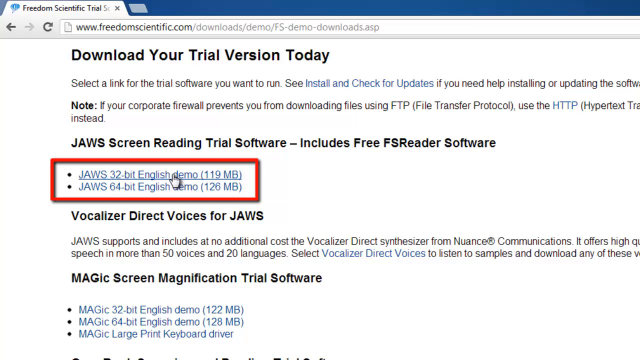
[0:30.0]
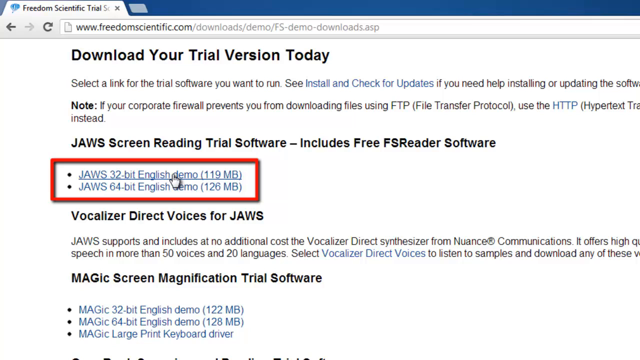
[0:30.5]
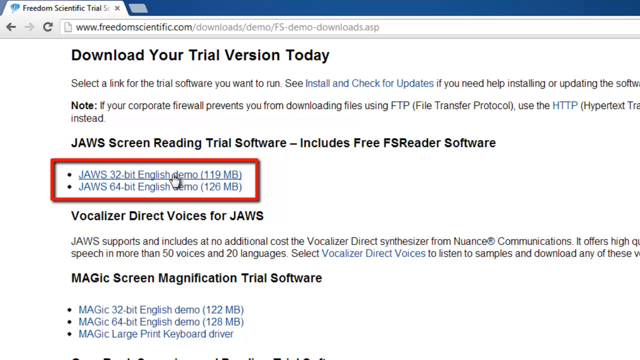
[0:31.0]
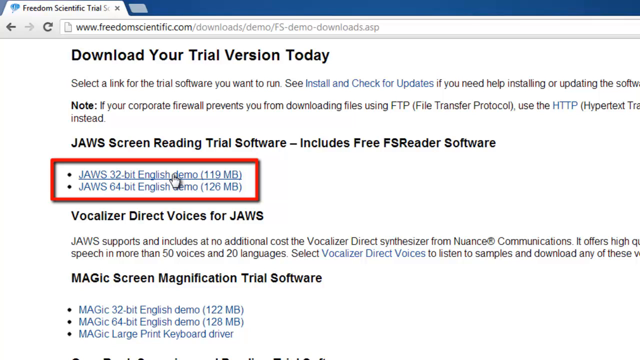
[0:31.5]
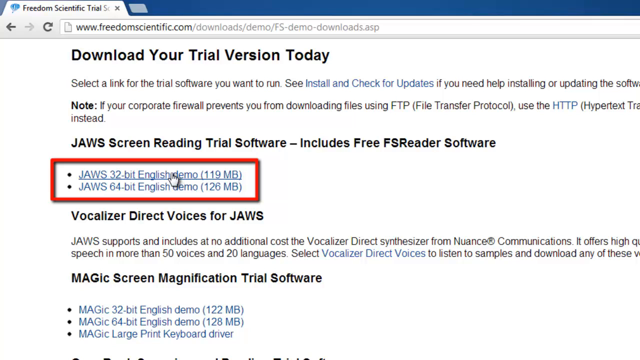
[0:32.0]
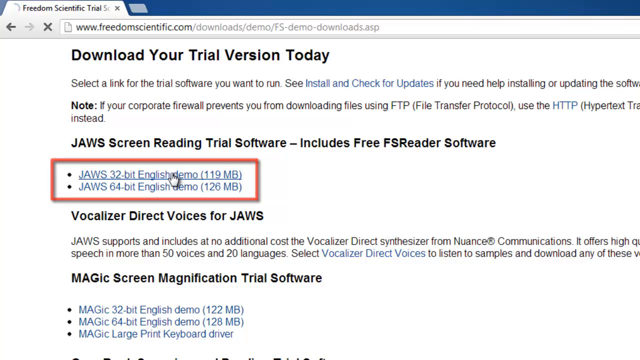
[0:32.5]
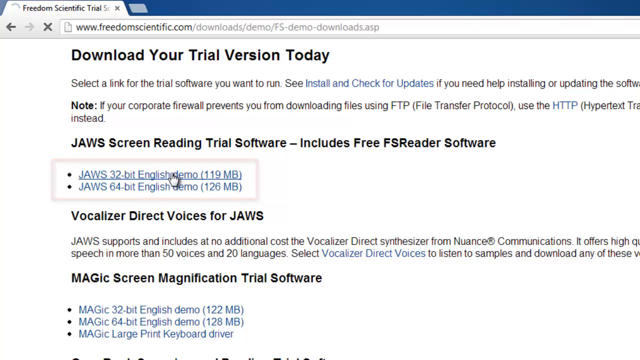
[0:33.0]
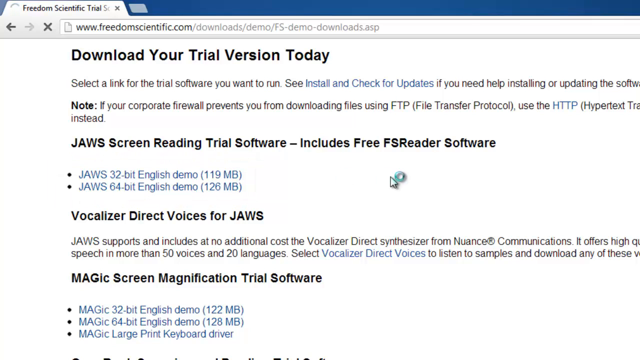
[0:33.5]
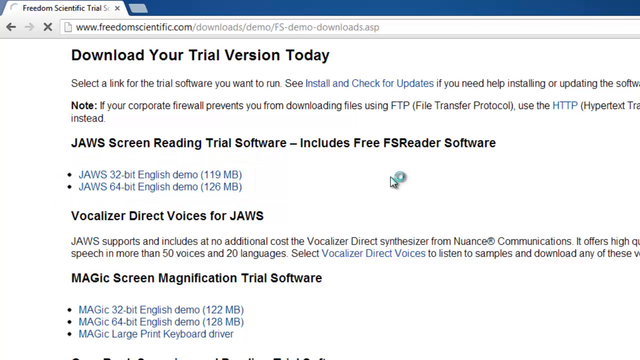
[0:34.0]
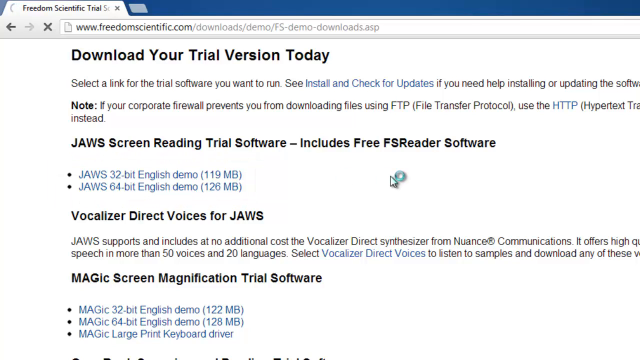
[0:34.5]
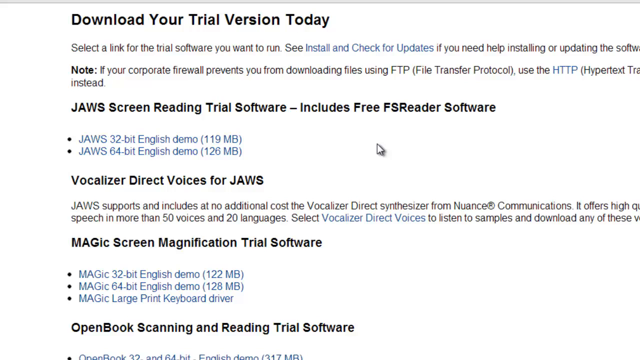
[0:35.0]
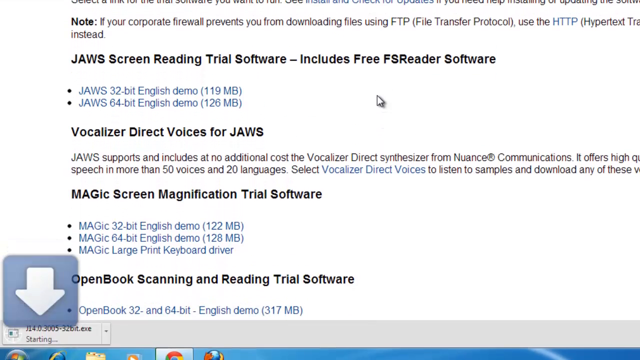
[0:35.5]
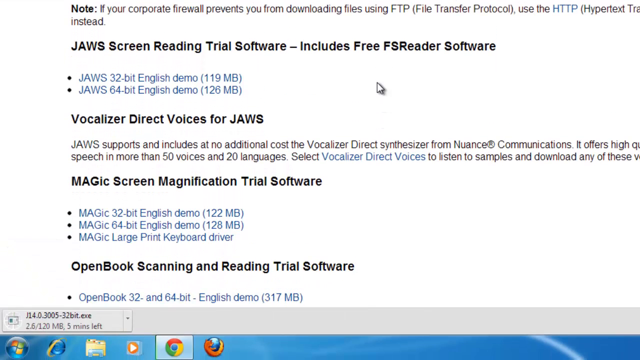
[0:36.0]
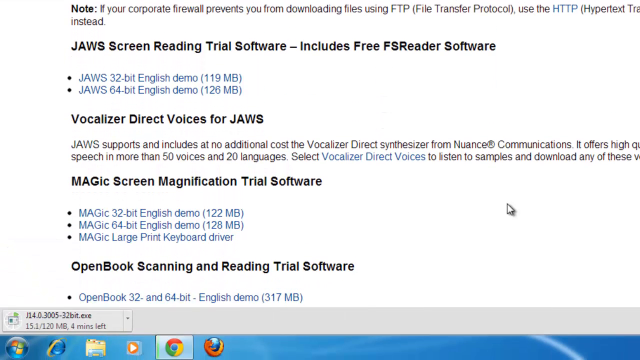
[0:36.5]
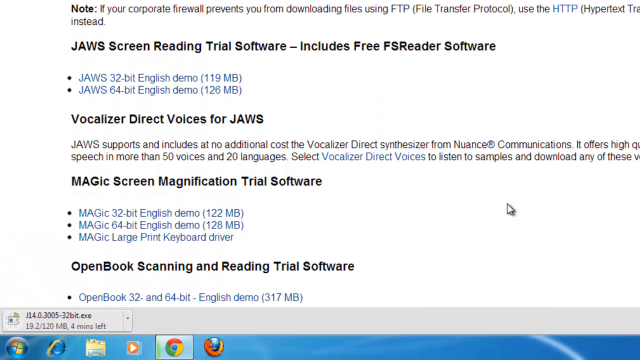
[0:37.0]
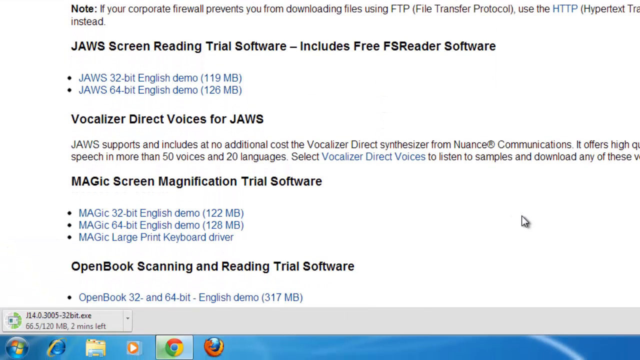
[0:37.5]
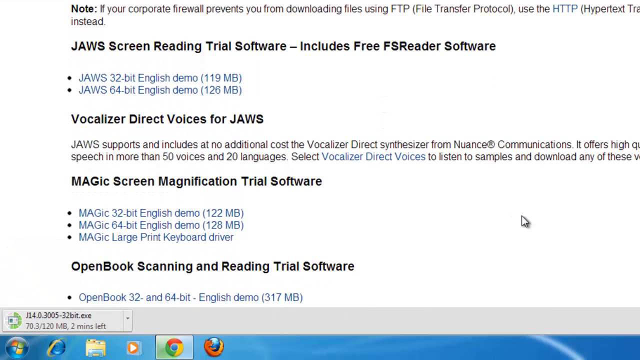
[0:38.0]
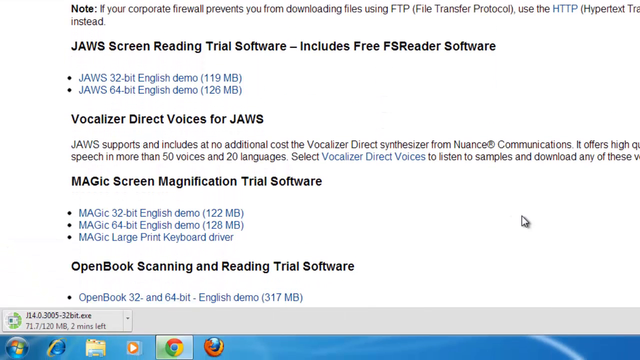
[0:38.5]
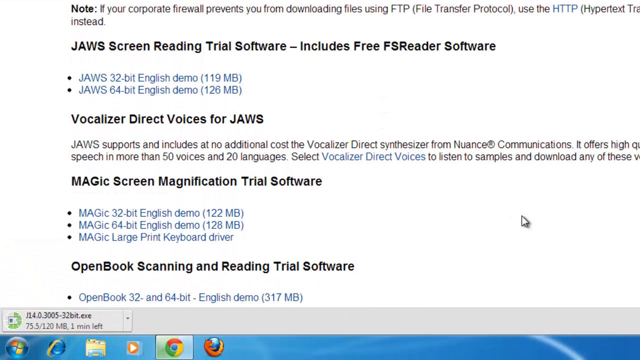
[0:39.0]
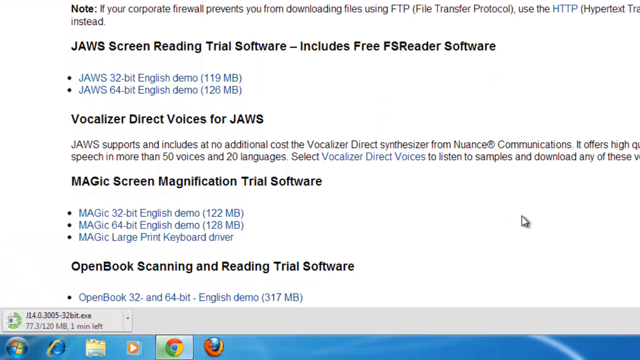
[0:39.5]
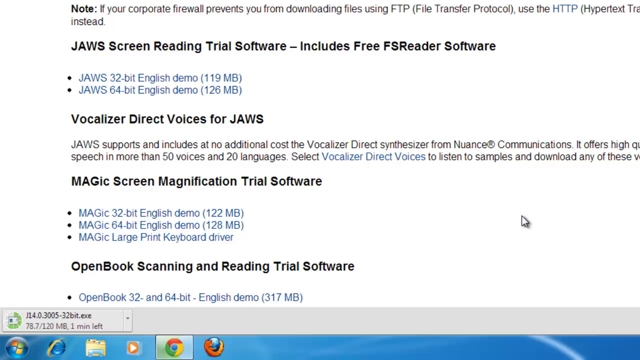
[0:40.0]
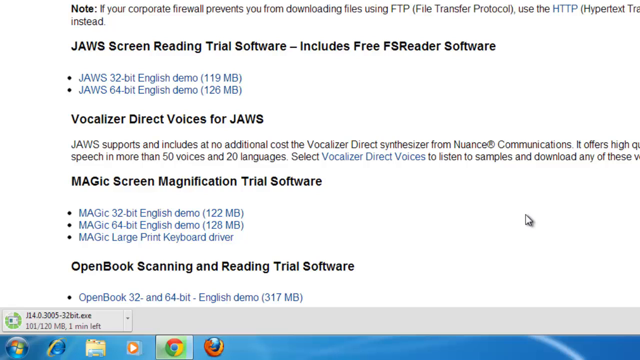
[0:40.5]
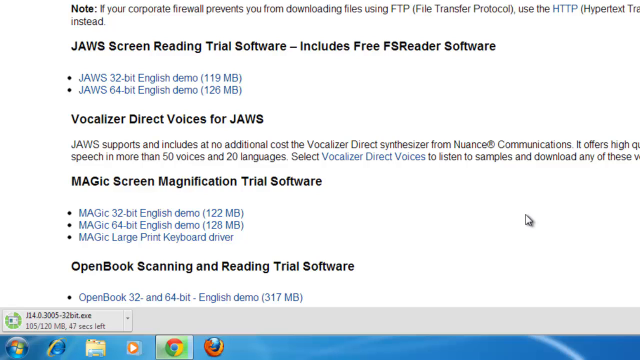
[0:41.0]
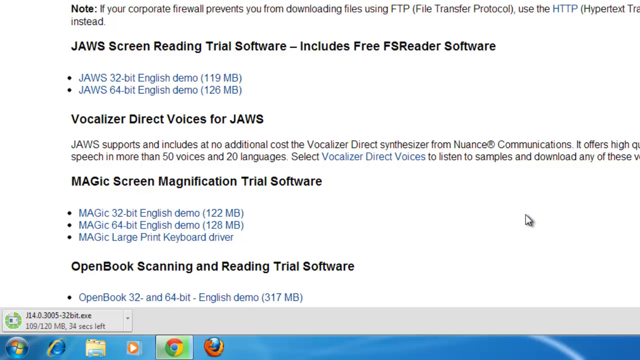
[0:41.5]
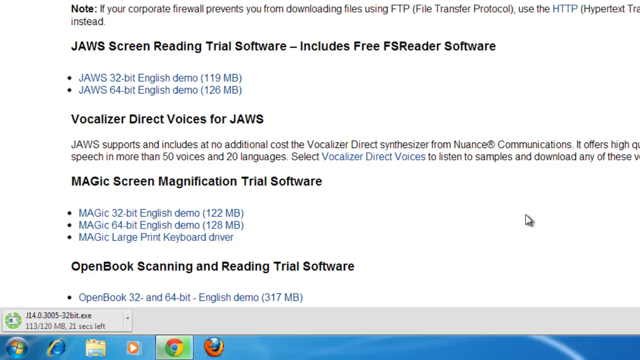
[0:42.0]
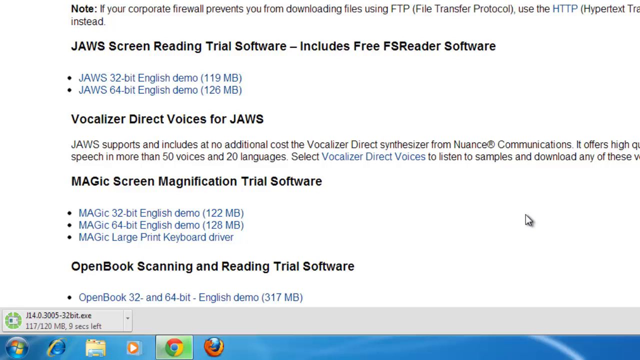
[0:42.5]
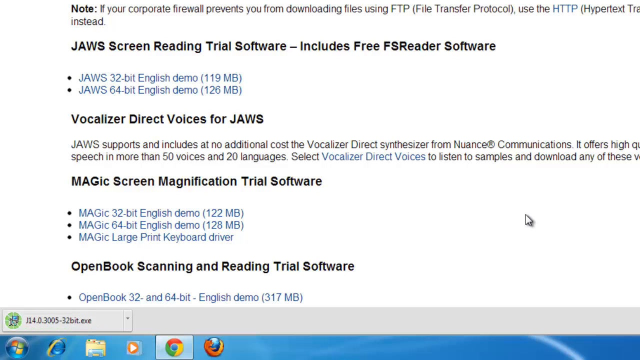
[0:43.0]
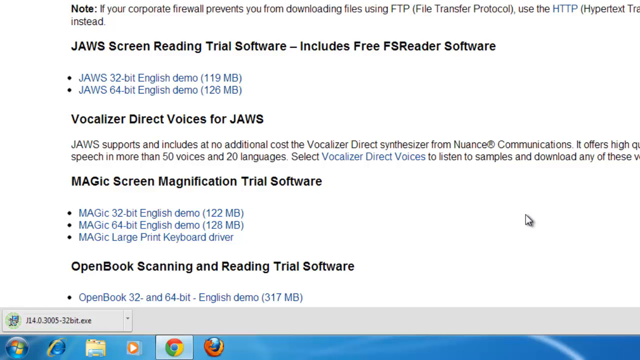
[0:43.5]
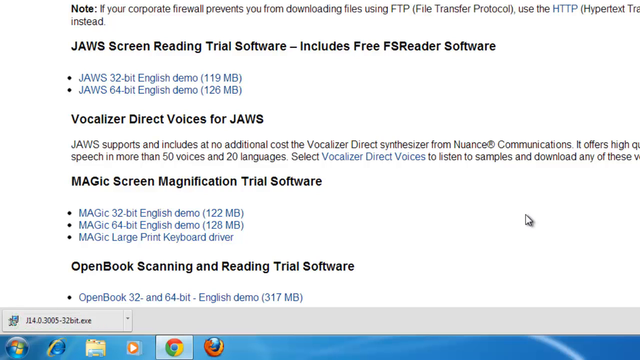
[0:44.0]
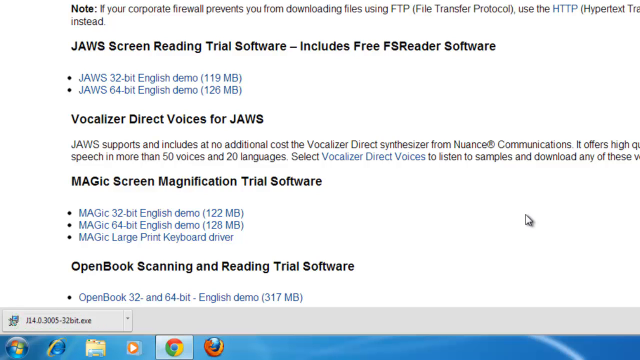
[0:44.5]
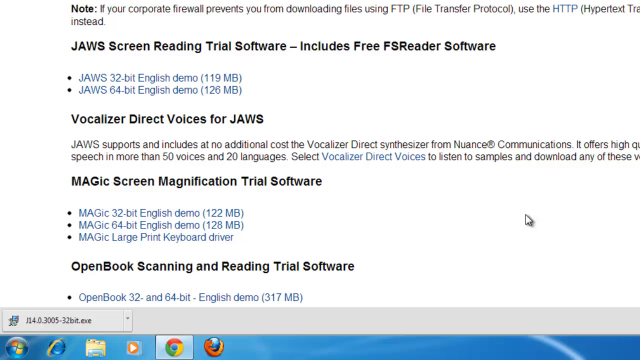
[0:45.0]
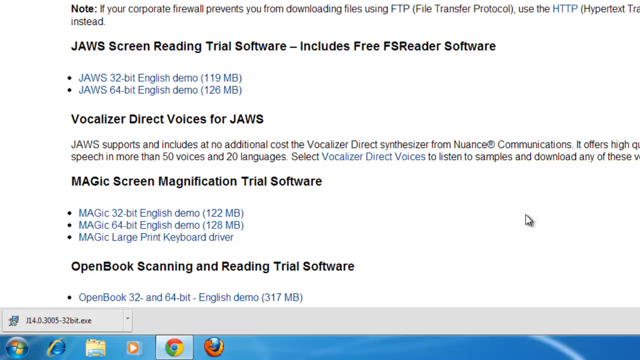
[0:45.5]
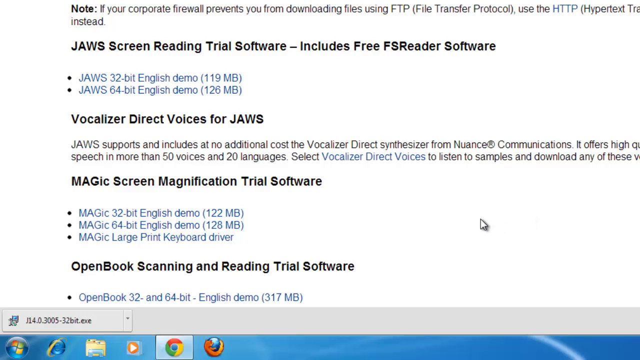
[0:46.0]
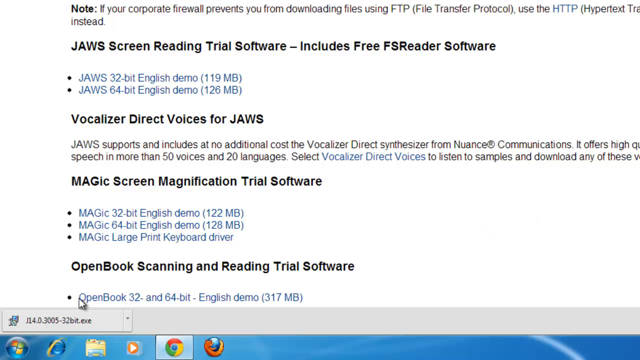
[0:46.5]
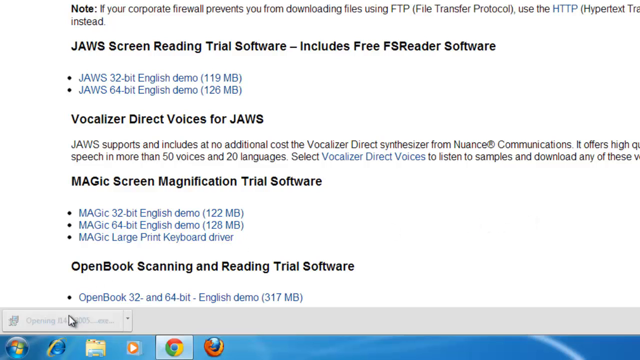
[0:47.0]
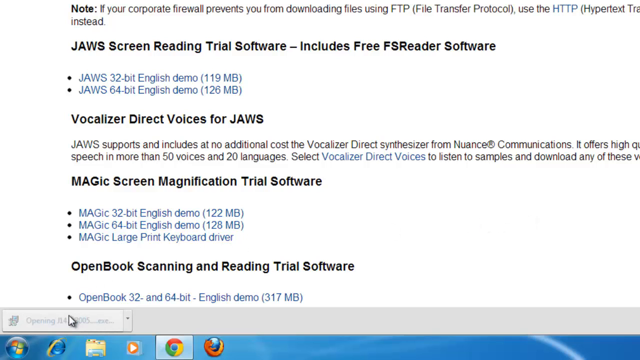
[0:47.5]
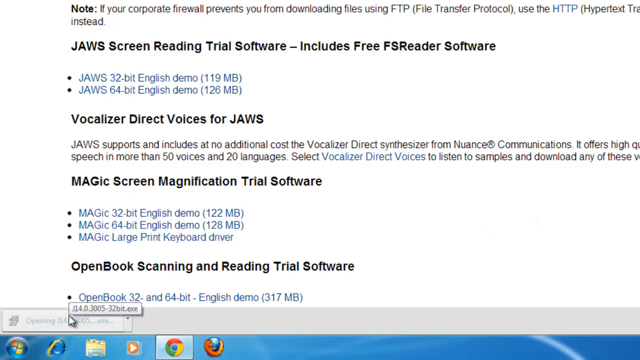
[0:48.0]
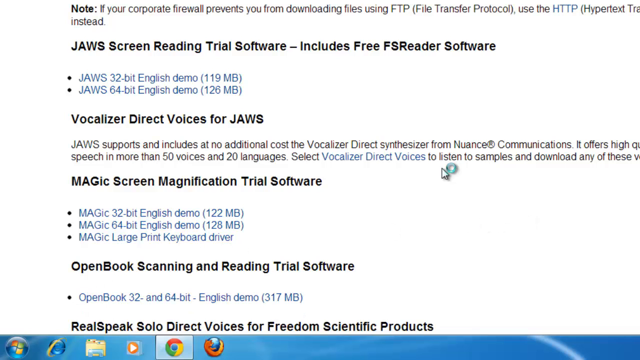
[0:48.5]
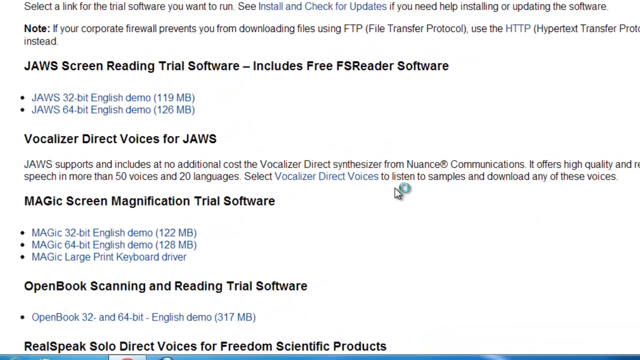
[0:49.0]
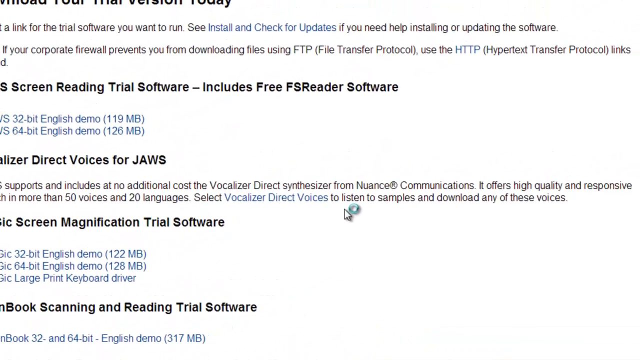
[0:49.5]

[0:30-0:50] A close-up shows the downloads section of the website freedomscientific.com, the only tab open in the browser. The page's title section says "Download Your Trial Version Today", with more information underneath, and notes and blue clickable hyperlinks appear throughout the page. There are demo files for 32-bit and 64-bit English demos, and a file for a large print keyboard driver. Under the JAWS screen reading trial software section, the two files are highlighted with a red box, and the cursor hovers over the JAWS 32-bit English demo, a 119-megabyte download.